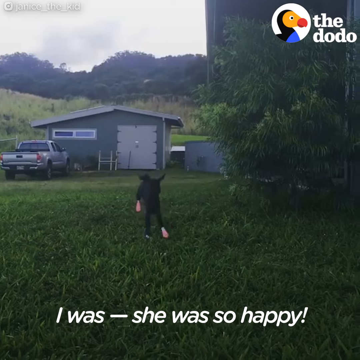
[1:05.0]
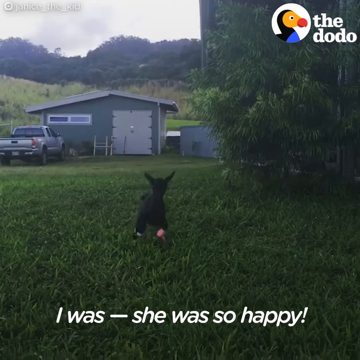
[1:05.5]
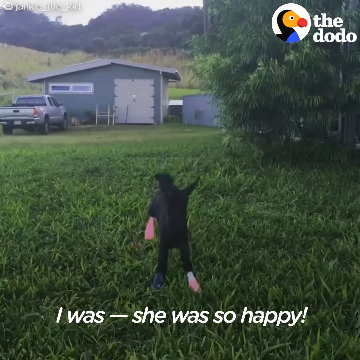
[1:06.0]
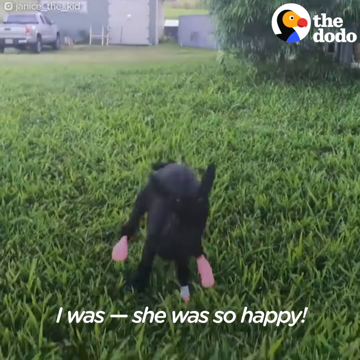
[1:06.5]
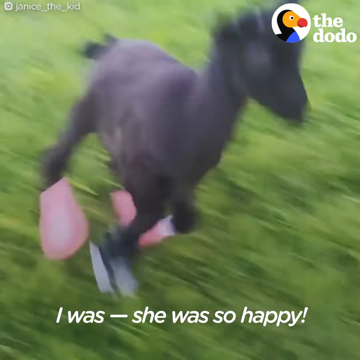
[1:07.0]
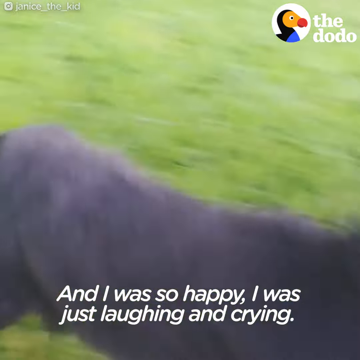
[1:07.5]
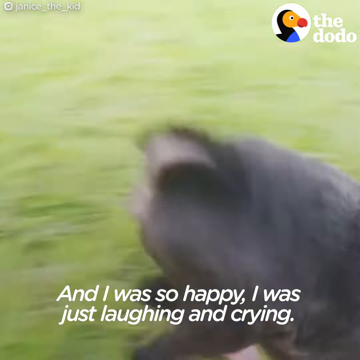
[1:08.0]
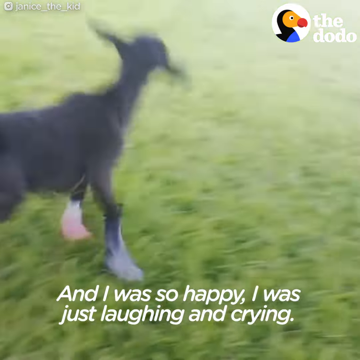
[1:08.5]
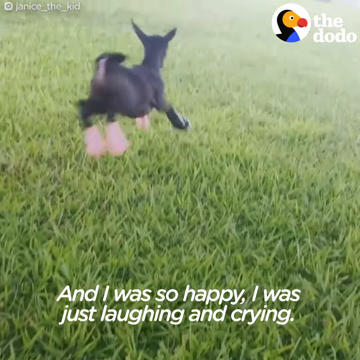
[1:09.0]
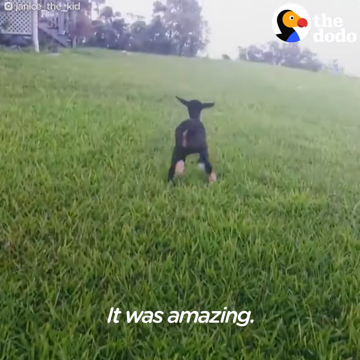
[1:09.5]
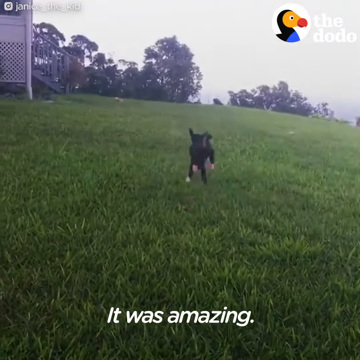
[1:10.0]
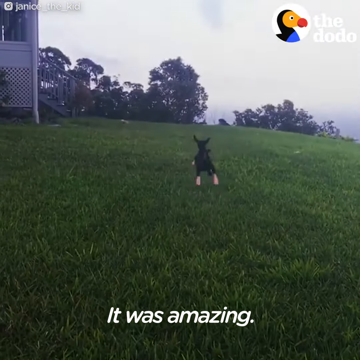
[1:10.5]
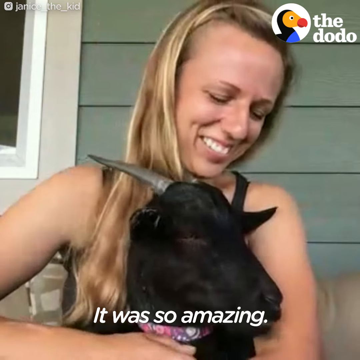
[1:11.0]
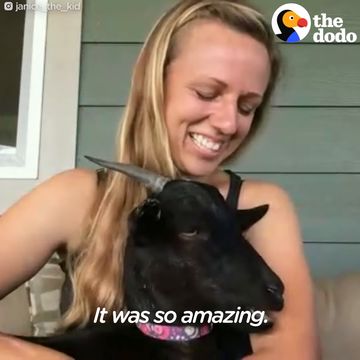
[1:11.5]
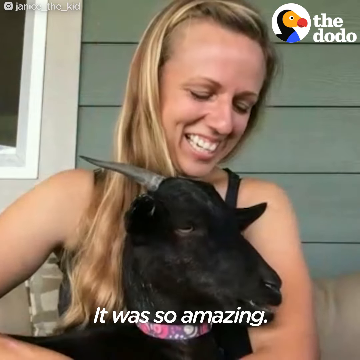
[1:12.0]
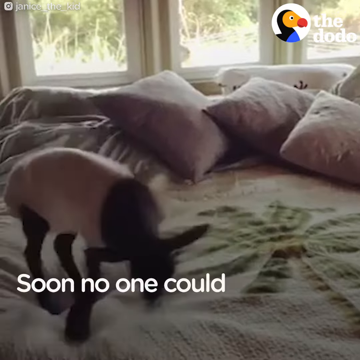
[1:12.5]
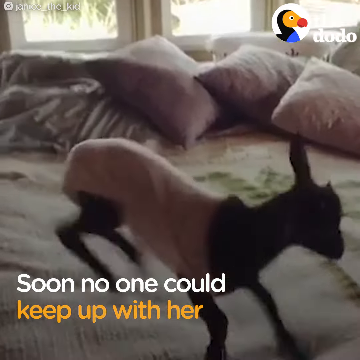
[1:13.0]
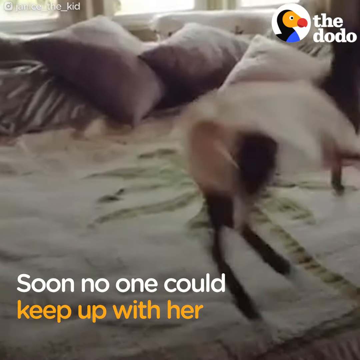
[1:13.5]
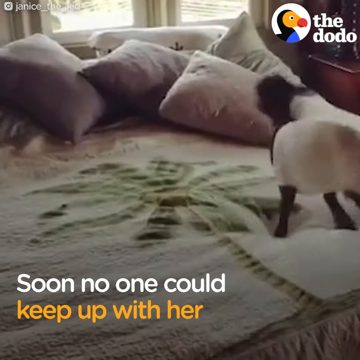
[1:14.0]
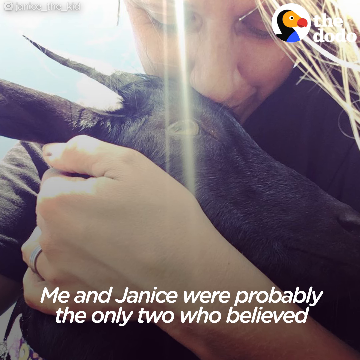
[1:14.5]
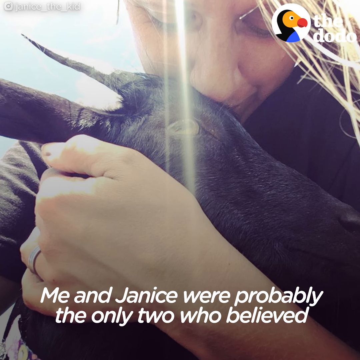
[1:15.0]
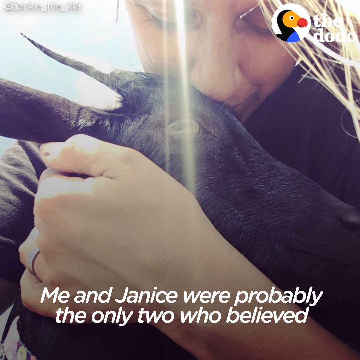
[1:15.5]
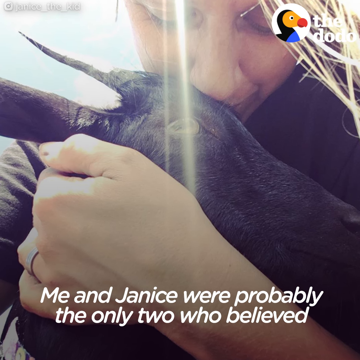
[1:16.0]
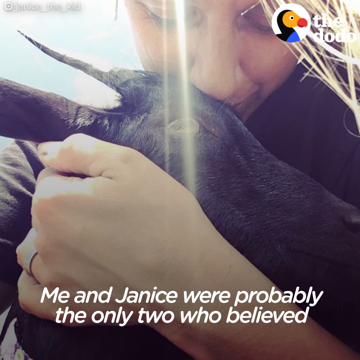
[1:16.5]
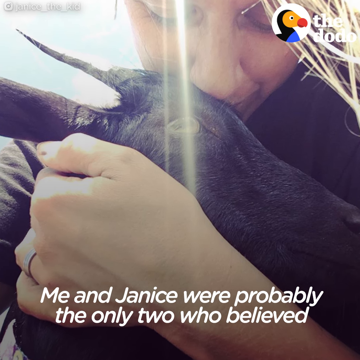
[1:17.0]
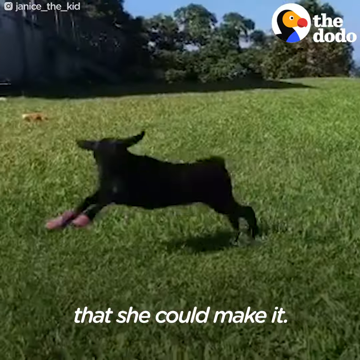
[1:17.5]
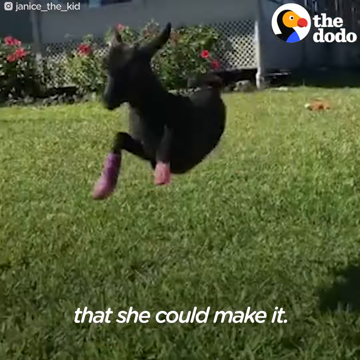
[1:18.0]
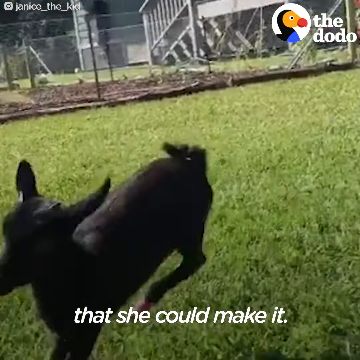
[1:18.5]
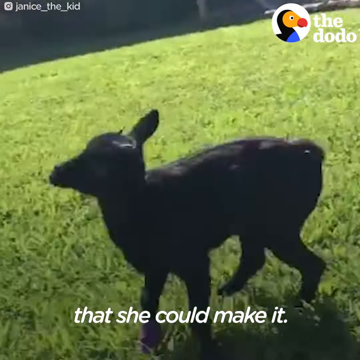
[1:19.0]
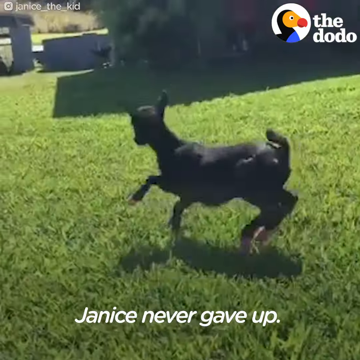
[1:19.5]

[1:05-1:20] The little goat runs all over with little bandages on his feet: three pink ones on three paws and one blue one on a front paw. He is shown with the lady, who caresses him, but mostly he runs around between caresses. He runs and jumps all over a field of nothing but green grass, jumping really high, with some trees in the distance.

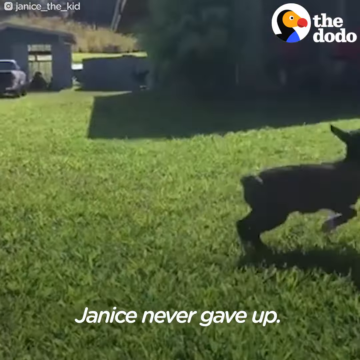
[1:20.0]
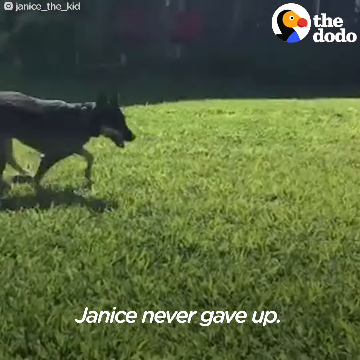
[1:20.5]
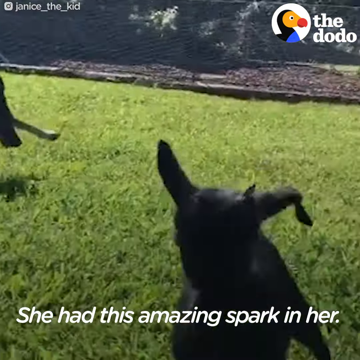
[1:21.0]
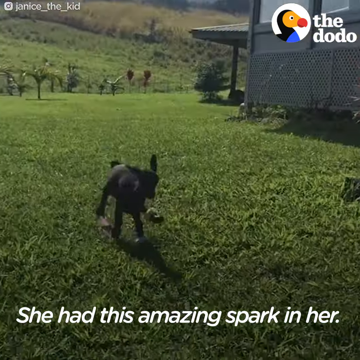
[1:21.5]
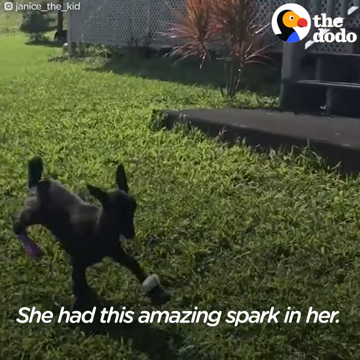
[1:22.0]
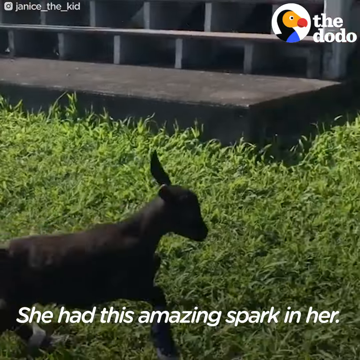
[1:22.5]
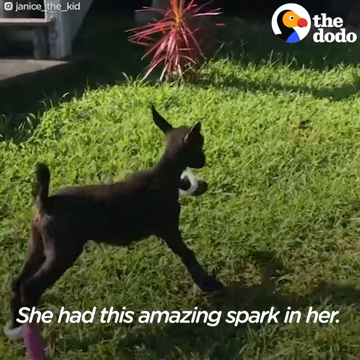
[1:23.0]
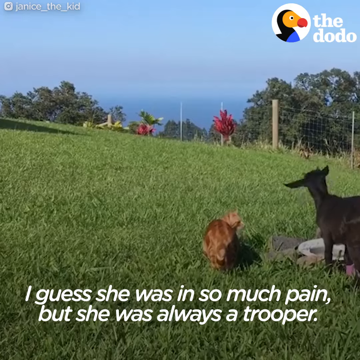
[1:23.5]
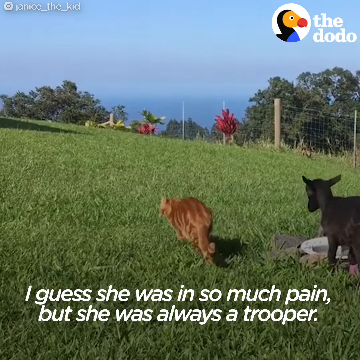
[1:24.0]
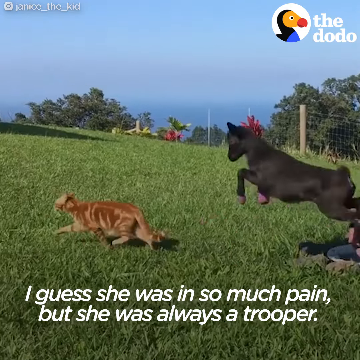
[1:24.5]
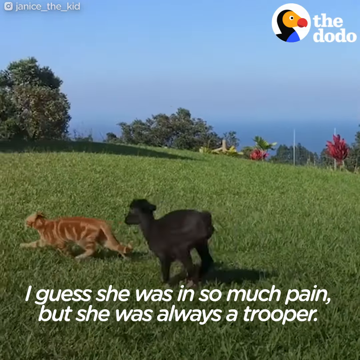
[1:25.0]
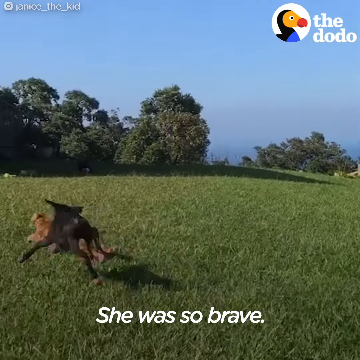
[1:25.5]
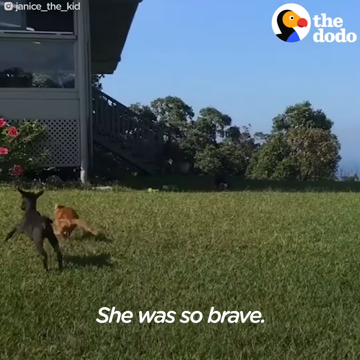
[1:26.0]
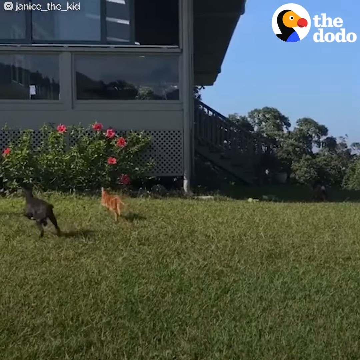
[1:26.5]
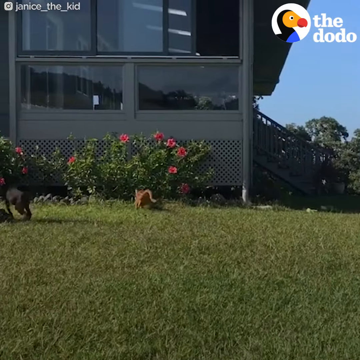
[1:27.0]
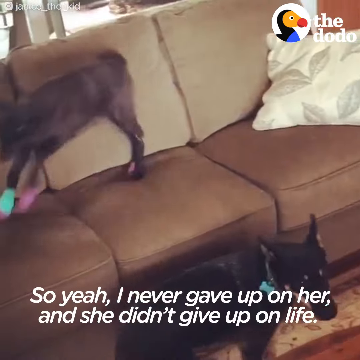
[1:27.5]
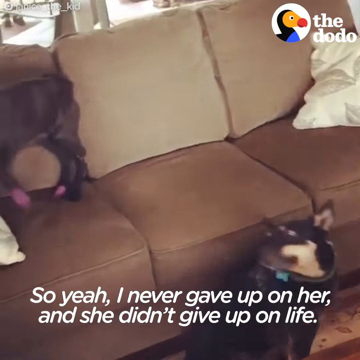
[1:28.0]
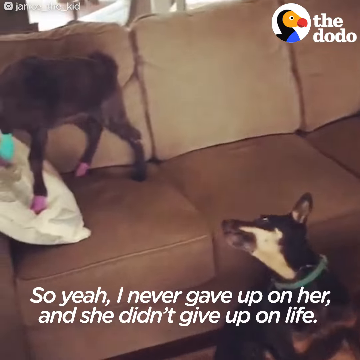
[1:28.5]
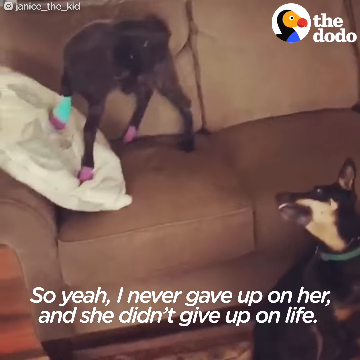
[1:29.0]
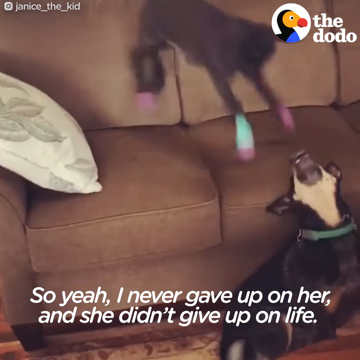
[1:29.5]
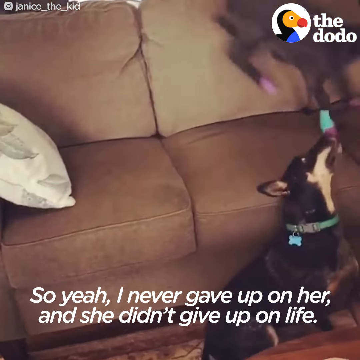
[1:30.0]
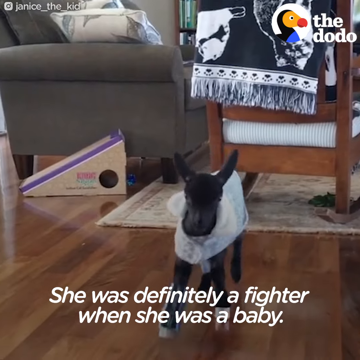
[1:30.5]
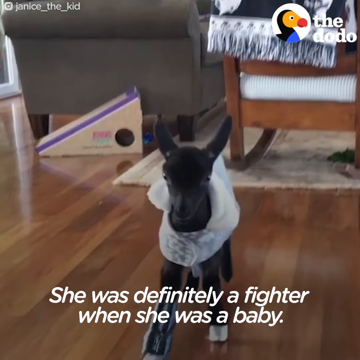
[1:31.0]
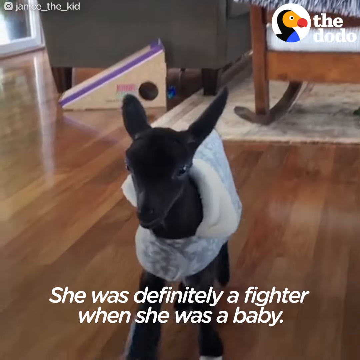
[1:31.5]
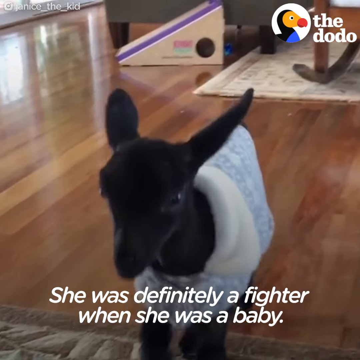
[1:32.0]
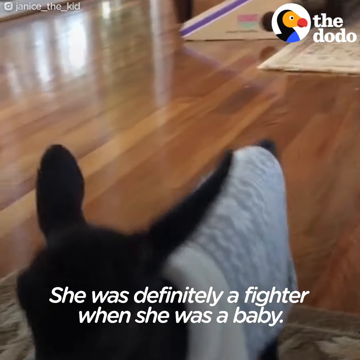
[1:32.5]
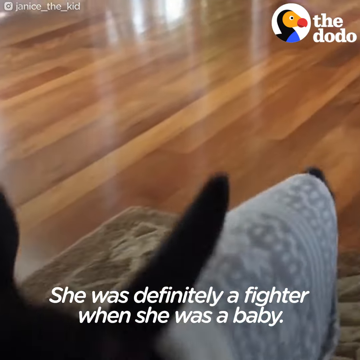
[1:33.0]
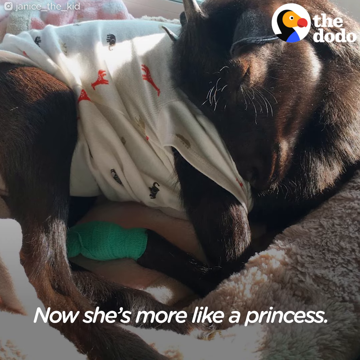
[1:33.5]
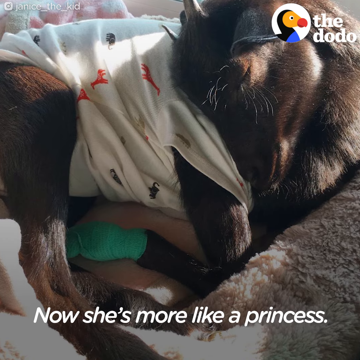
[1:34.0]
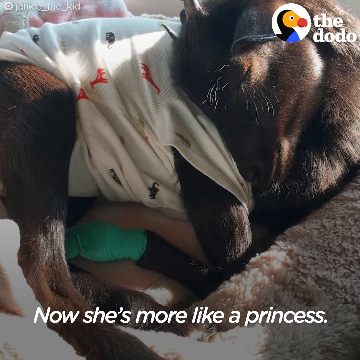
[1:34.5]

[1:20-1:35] The little goat runs with the big ginger cat all over a big green grassy yard. Inside the house, they walk over a hardwood floor. Back outside, they run on the green grass, with trees in the distance and a bush with pink flowers on it in front of the house. Inside, the animals walk on the hardwood floor, and the little goat jumps up and down on a brown leather couch with the ginger cat. A little black and kind of tan dog sits next to the couch.